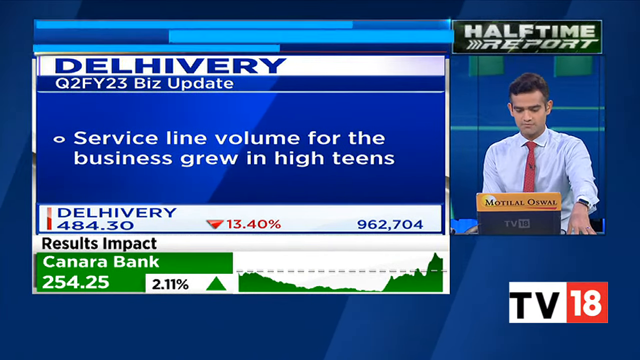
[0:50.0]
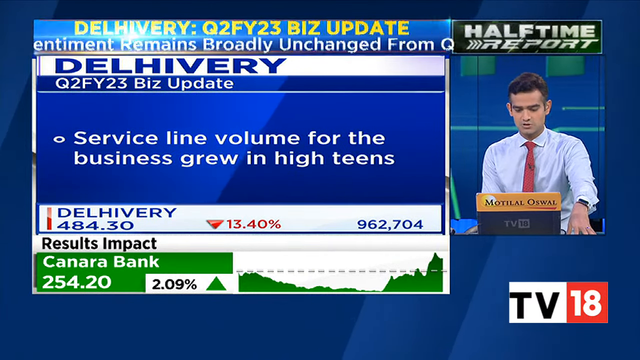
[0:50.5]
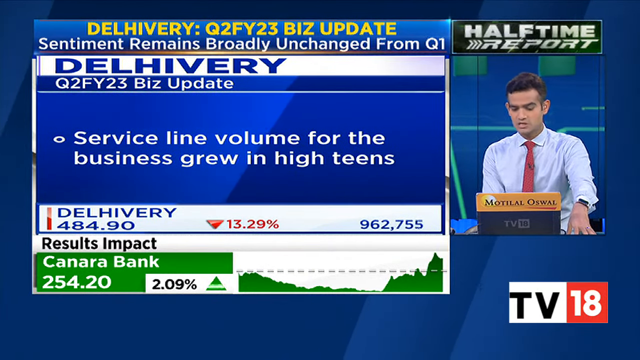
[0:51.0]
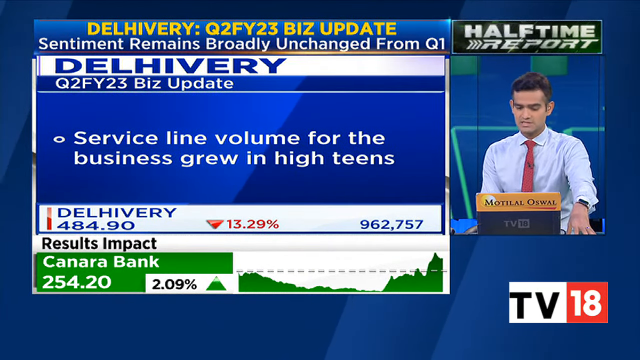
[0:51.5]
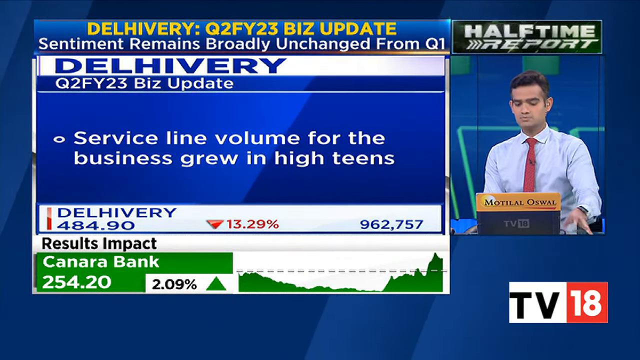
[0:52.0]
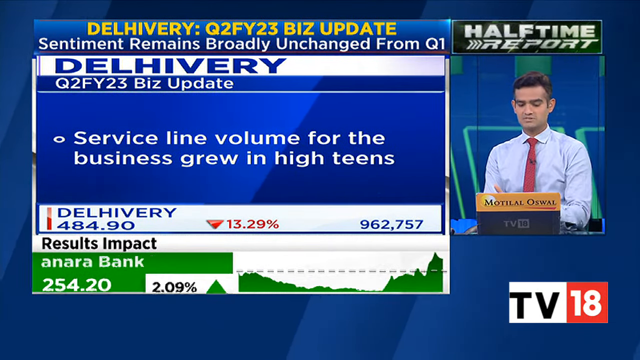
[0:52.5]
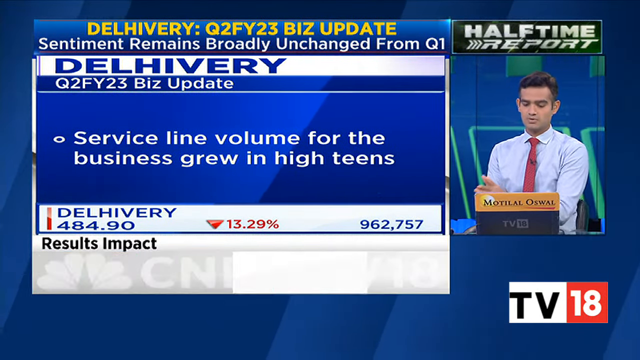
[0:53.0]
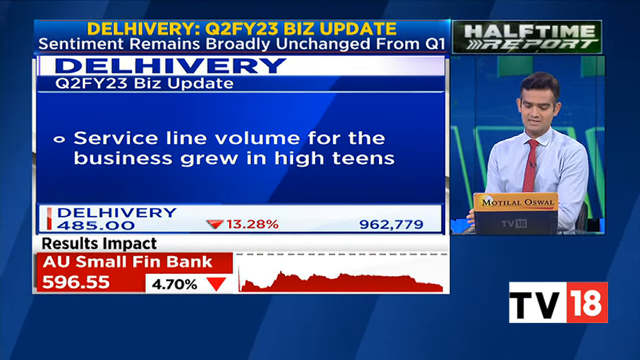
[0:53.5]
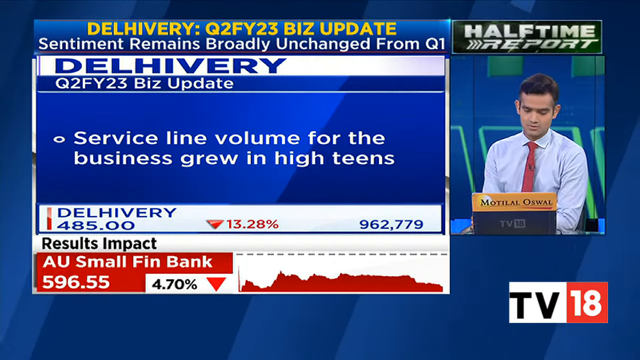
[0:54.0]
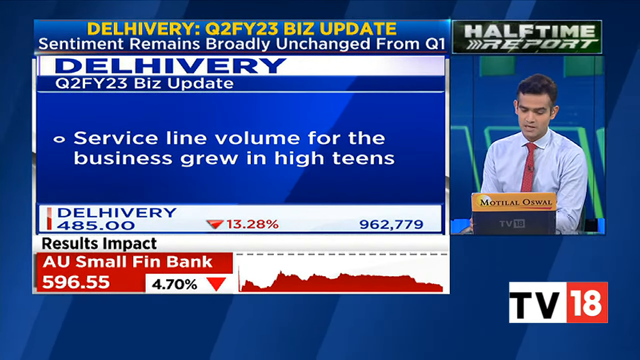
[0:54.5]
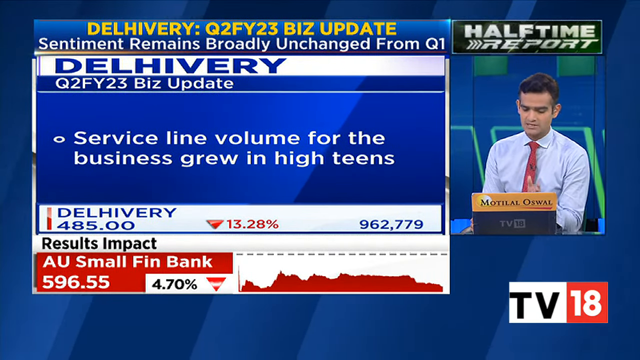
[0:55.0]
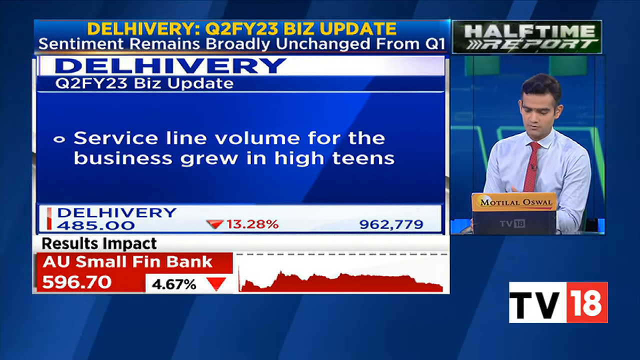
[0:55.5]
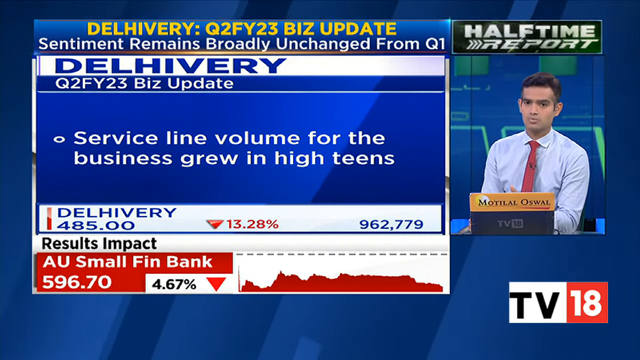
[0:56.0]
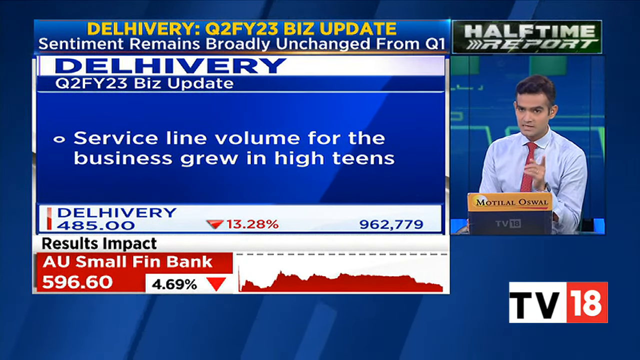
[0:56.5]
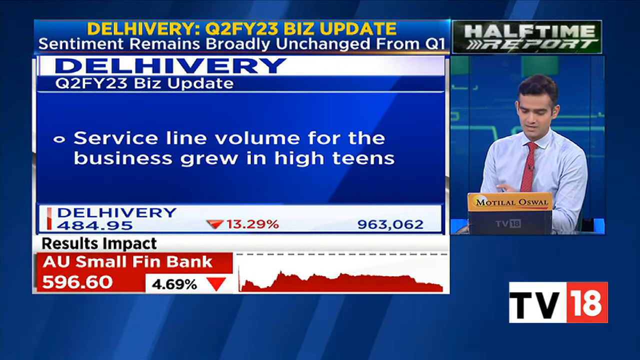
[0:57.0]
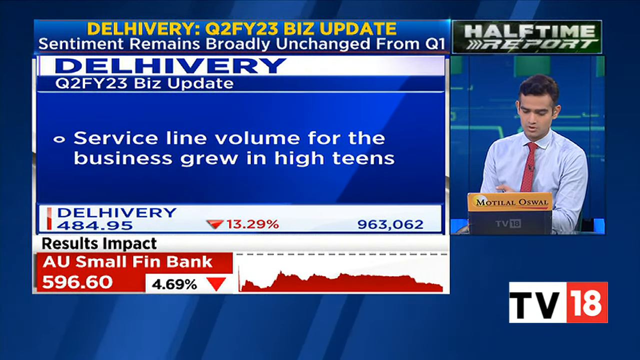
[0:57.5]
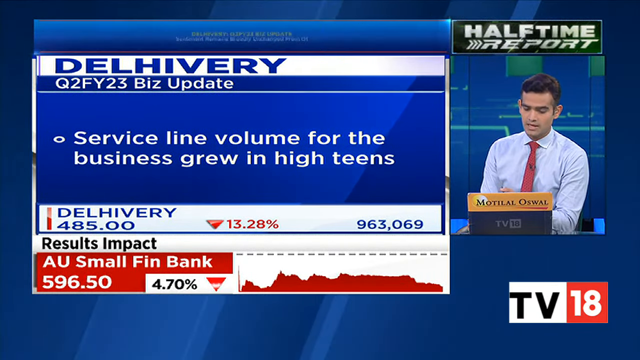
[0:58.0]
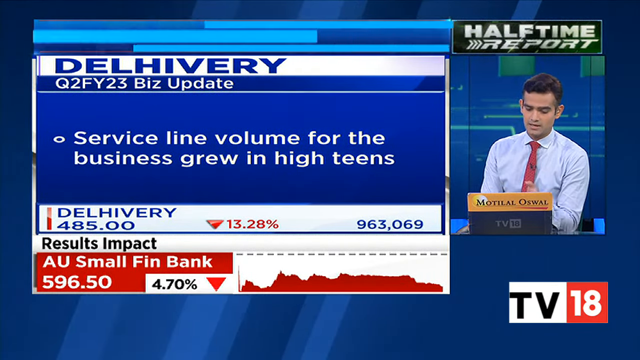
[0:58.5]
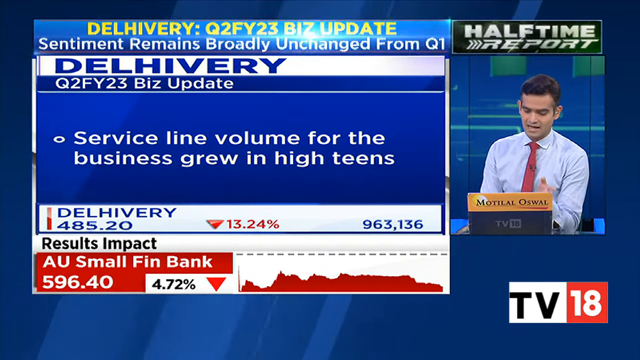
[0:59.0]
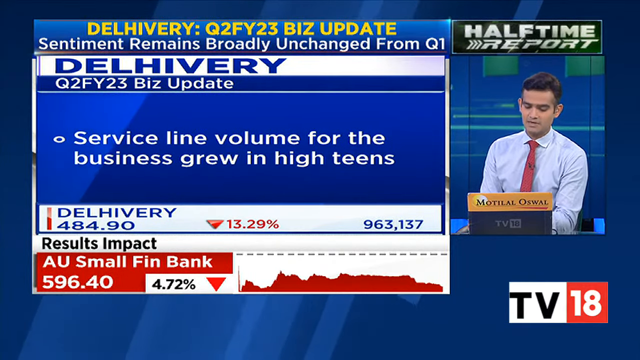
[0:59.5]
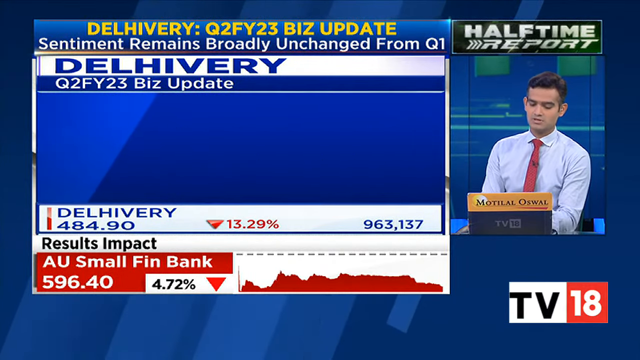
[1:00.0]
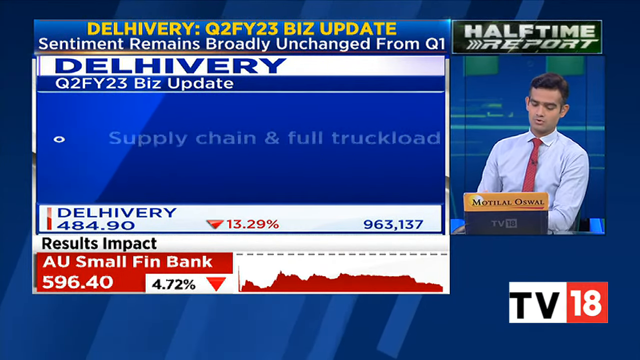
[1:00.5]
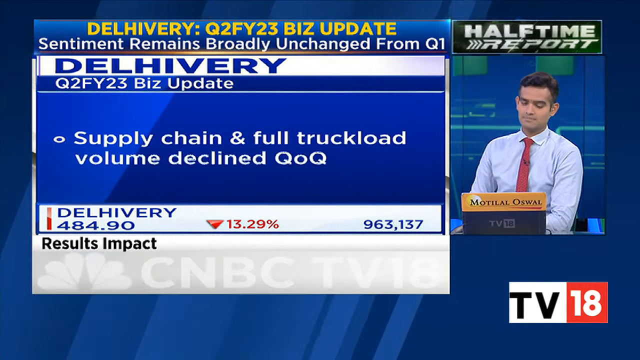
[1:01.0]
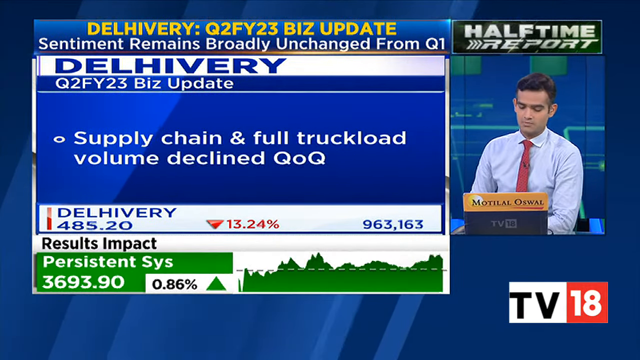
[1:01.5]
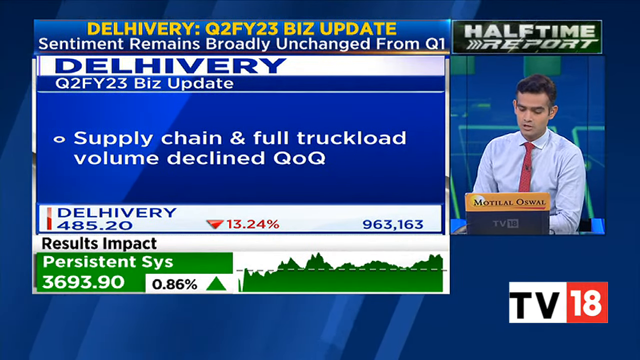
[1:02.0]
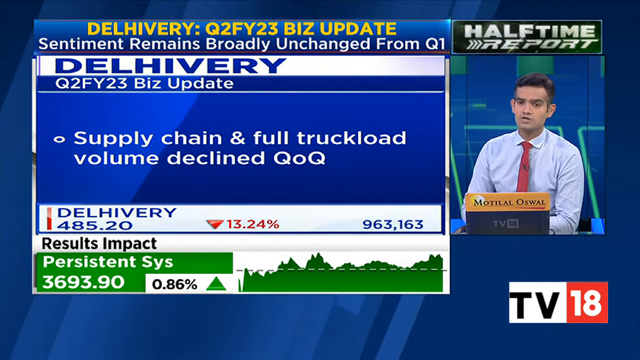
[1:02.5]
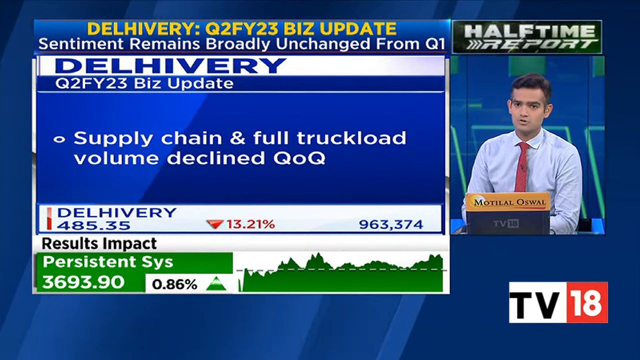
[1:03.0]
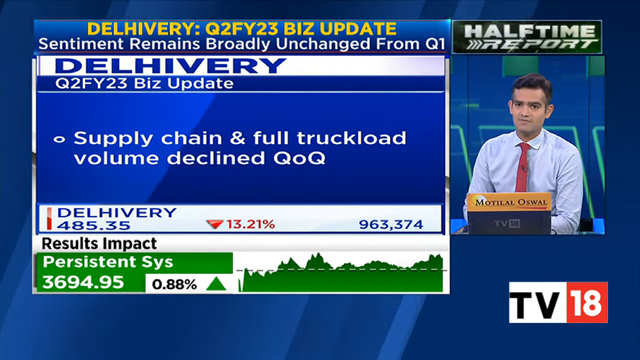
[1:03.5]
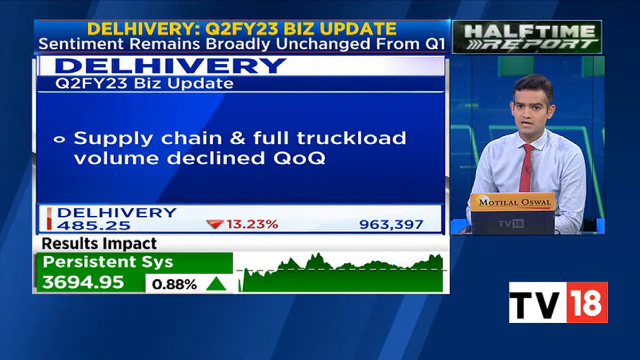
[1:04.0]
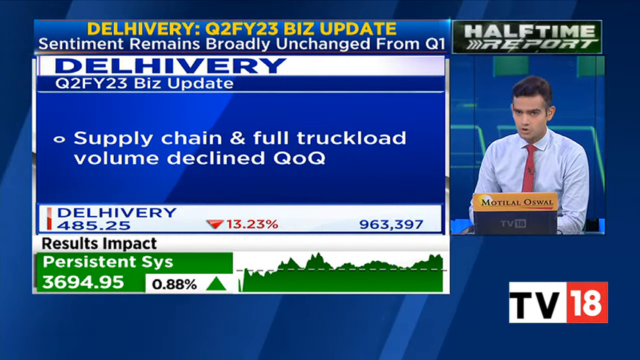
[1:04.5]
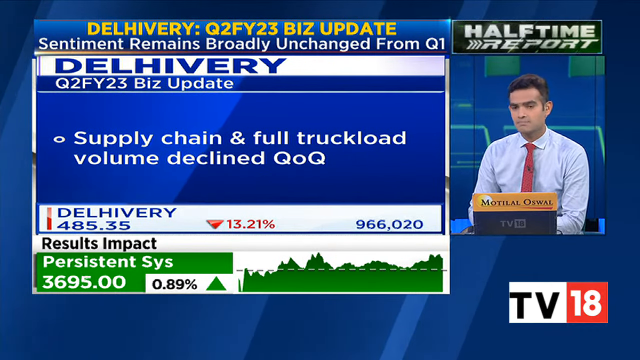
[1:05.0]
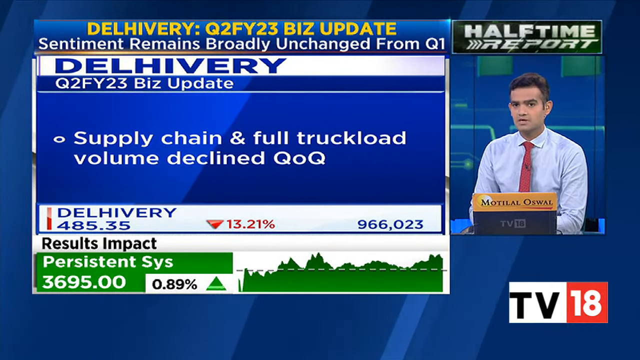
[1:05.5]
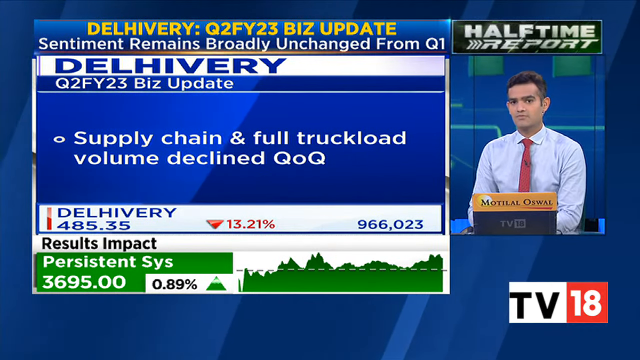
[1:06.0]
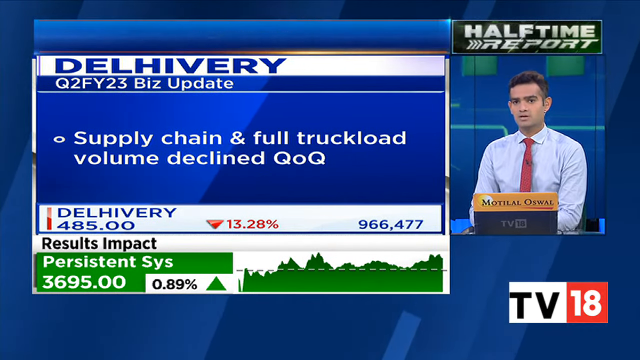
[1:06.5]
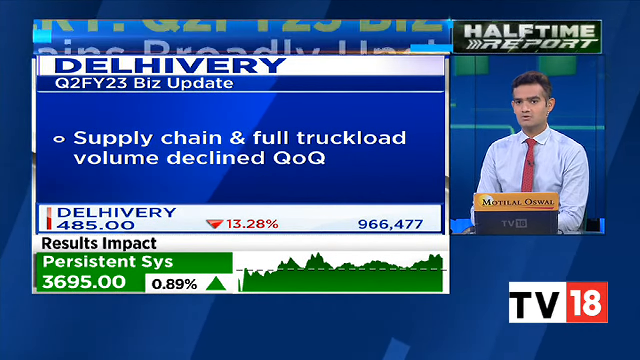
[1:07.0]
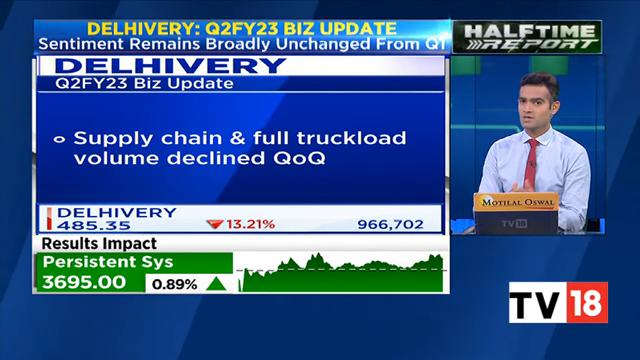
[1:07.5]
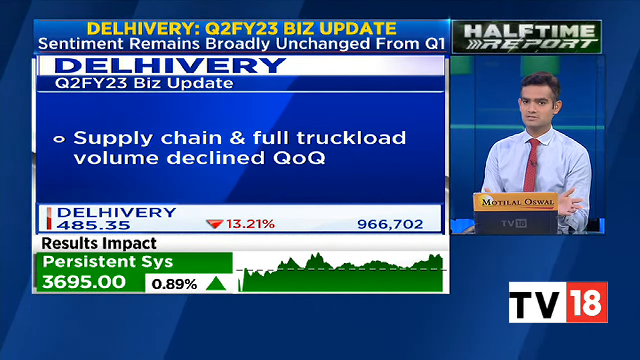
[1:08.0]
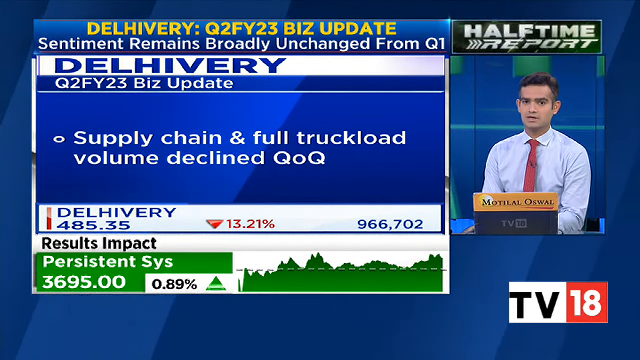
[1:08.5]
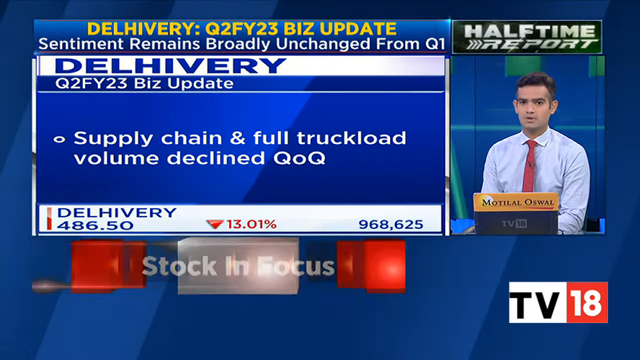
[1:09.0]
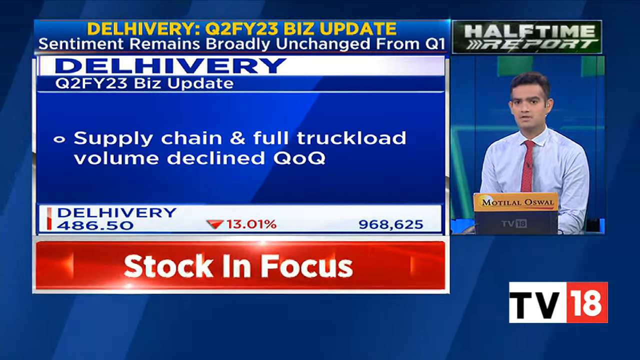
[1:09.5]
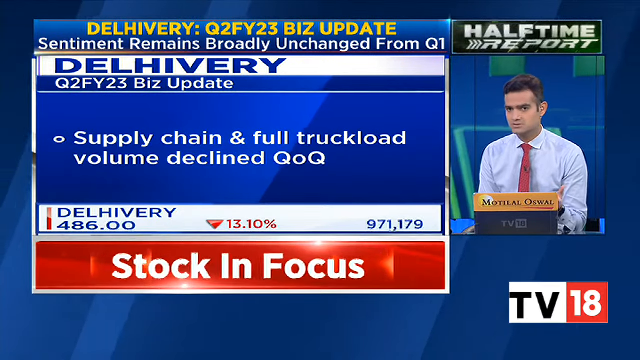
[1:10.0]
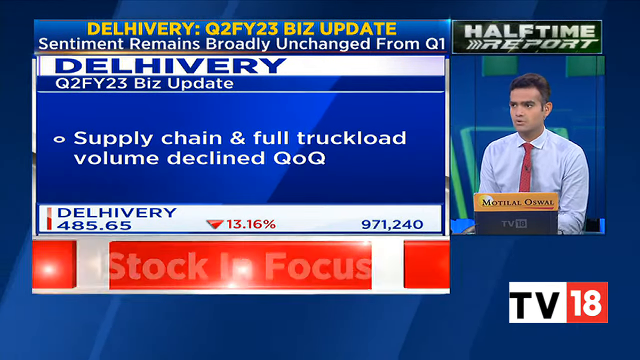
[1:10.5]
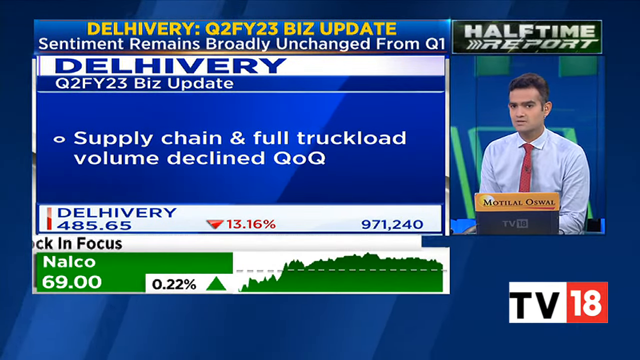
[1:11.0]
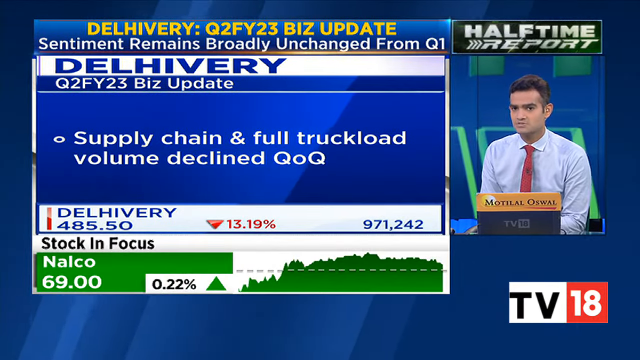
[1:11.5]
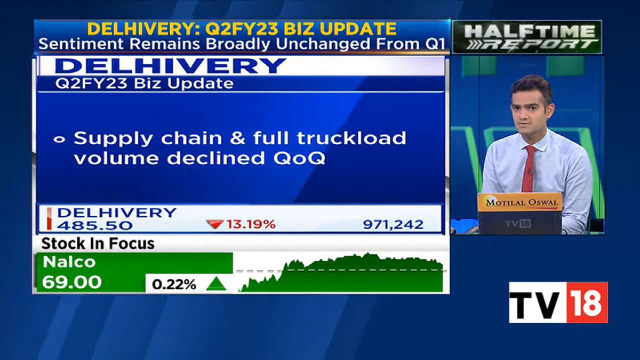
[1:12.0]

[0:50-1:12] The man appears to be wearing an Apple watch on his left hand, and he also wears a ring. The focus remains on the delhivery stock, while the results impact section shows that AU small fin bank has decreased; it is mostly red, below the previous day's close, and down by about 4.7 percent, continuing at approximately 4.7 percent. An additional Q2 business update for delhivery states that "supply chain and full truckload volume declined qoq," and the results impact shows Persistent Systems increasing by 0.89 percent above the previous day's close. A red banner at the bottom then reads "stock in focus," and the Nelko stock is shown in green, up 0.22 percent at around $69. The background behind the man has changing animations, with multiple green squares and boxes that appear to move in either direction.